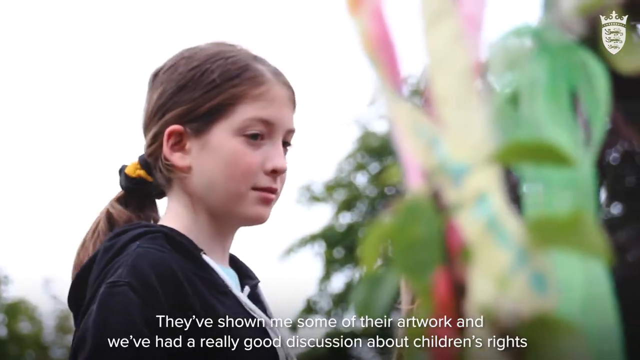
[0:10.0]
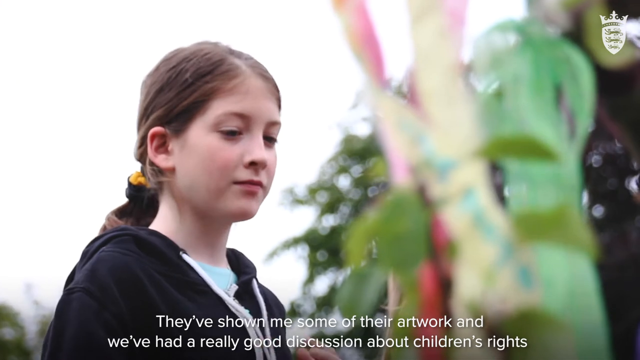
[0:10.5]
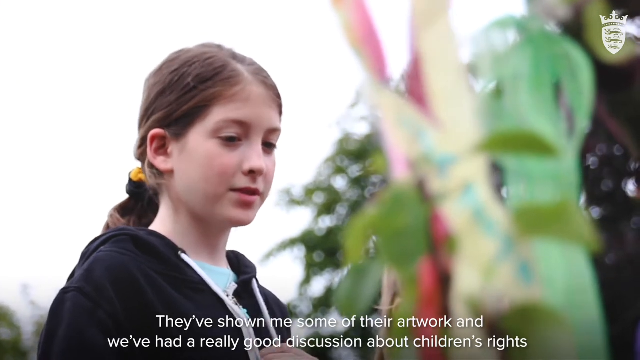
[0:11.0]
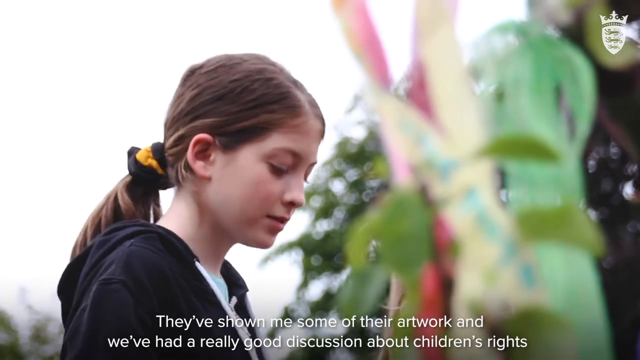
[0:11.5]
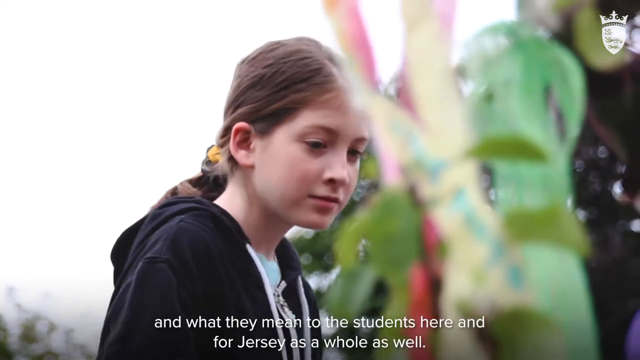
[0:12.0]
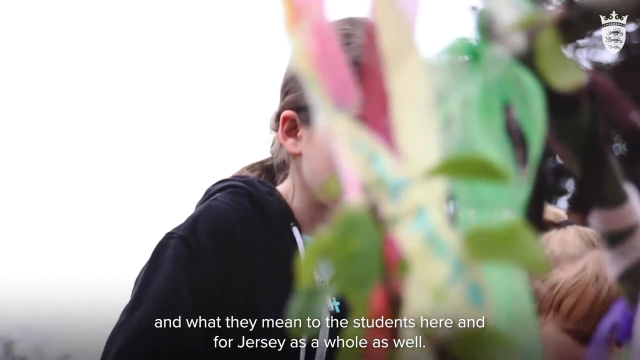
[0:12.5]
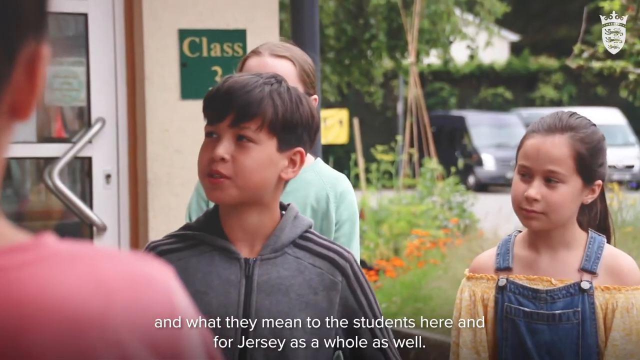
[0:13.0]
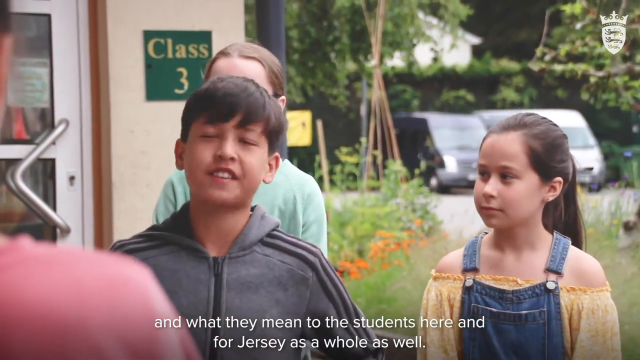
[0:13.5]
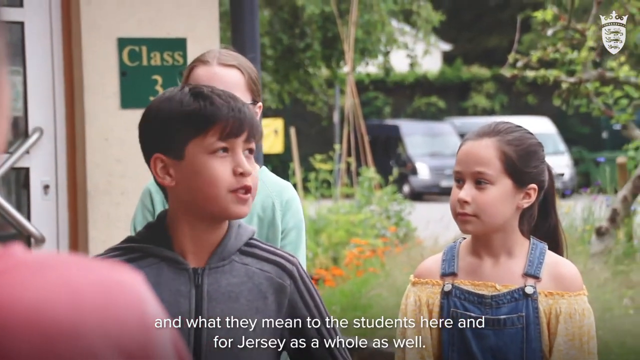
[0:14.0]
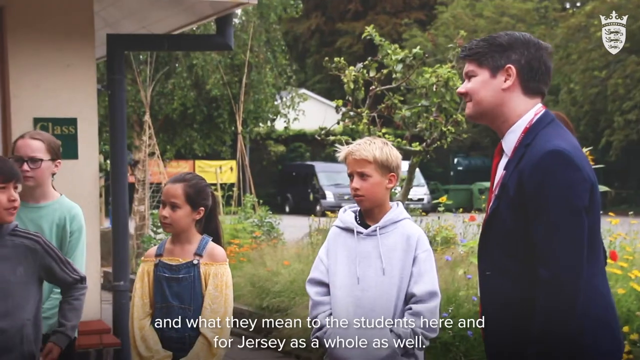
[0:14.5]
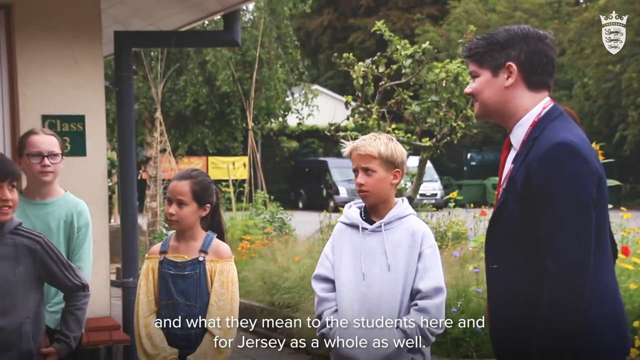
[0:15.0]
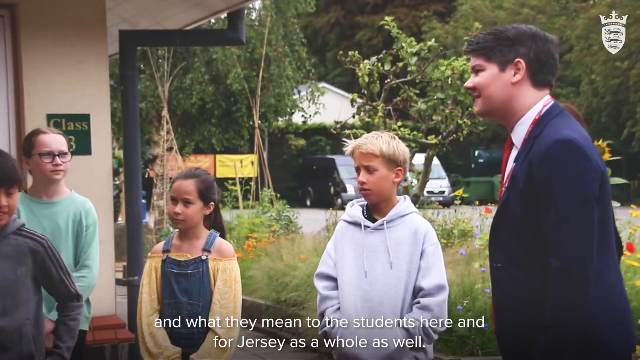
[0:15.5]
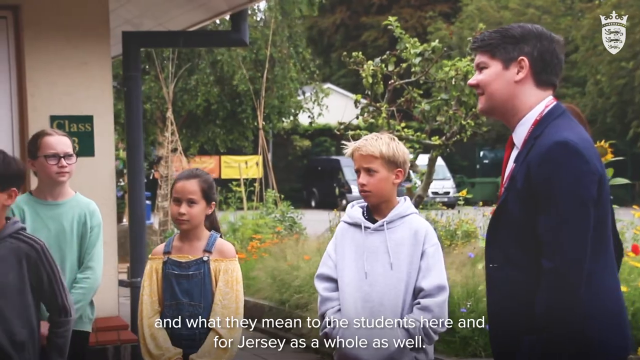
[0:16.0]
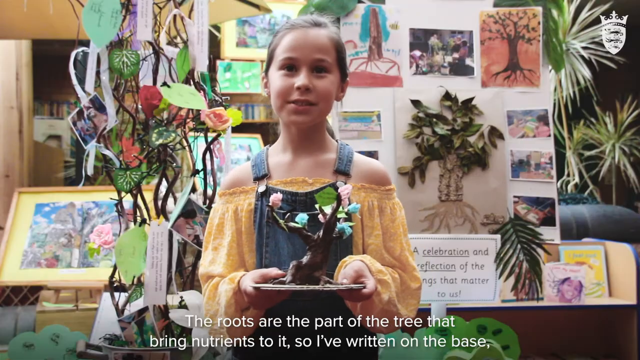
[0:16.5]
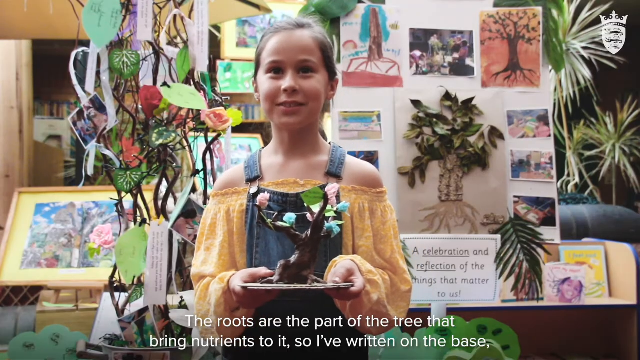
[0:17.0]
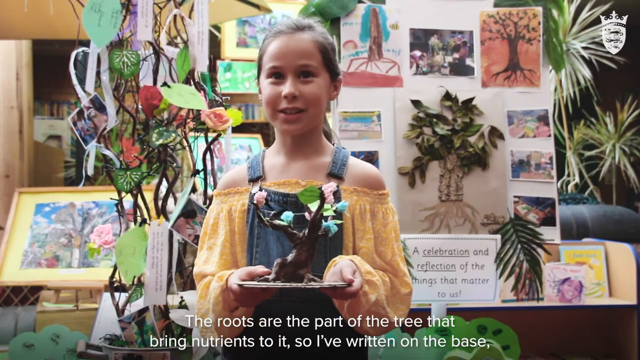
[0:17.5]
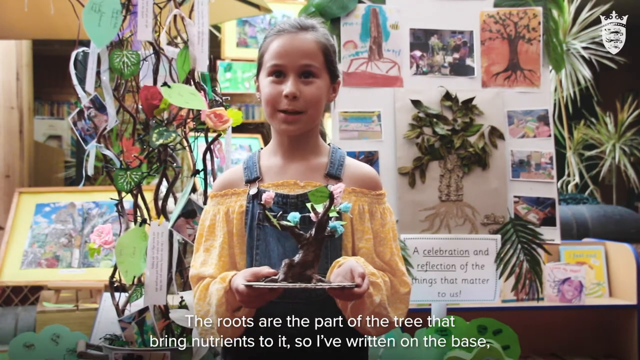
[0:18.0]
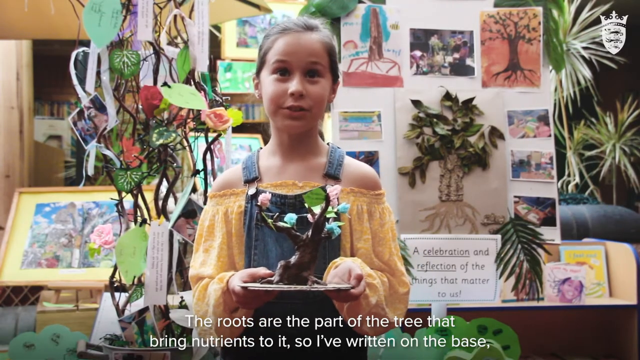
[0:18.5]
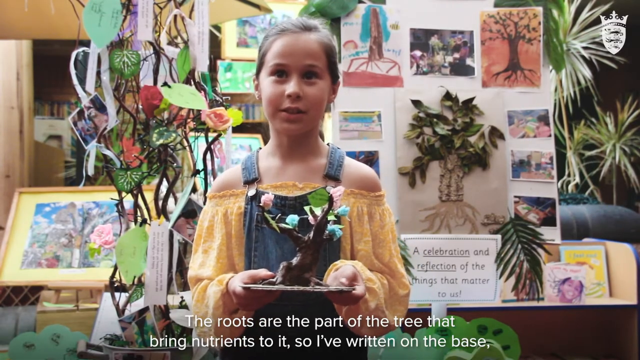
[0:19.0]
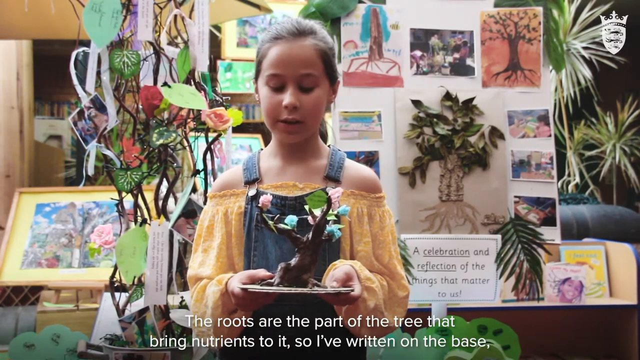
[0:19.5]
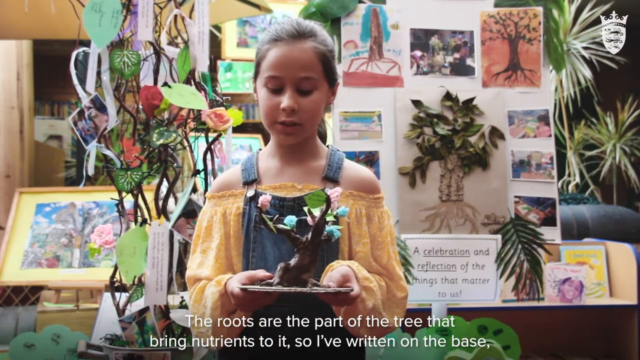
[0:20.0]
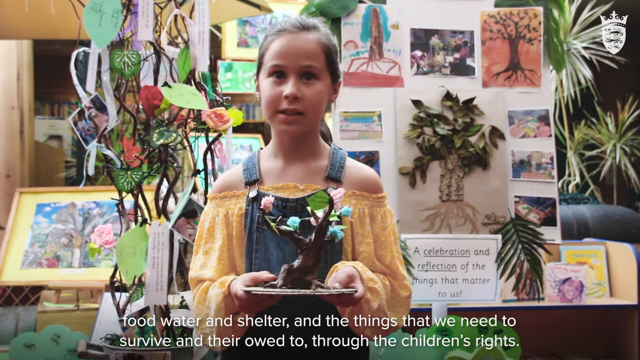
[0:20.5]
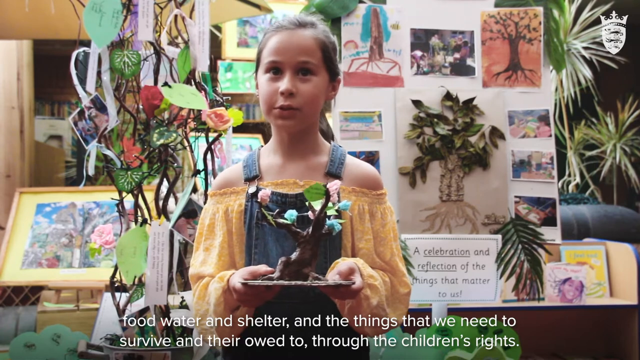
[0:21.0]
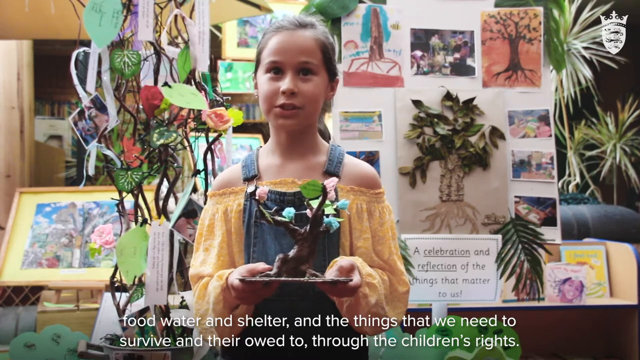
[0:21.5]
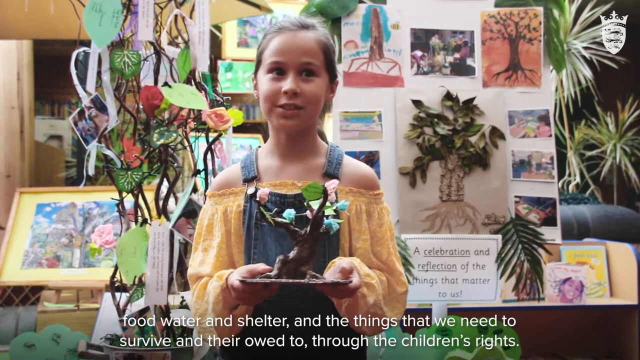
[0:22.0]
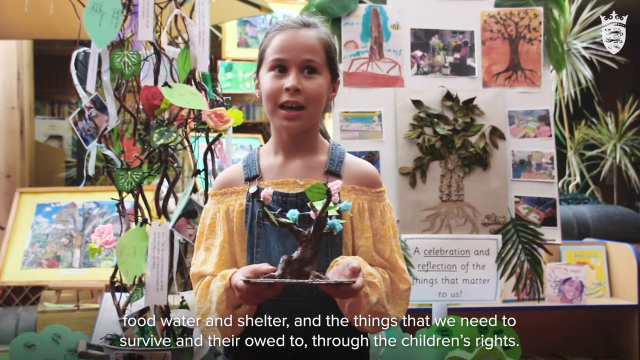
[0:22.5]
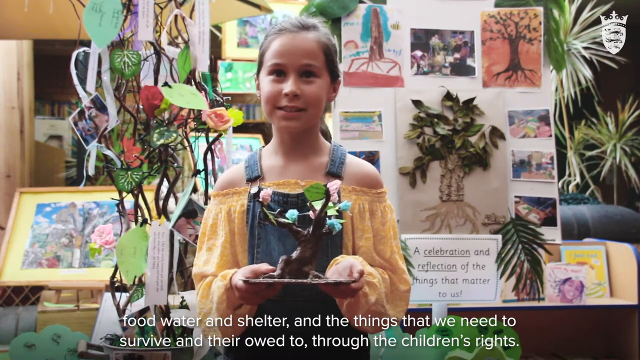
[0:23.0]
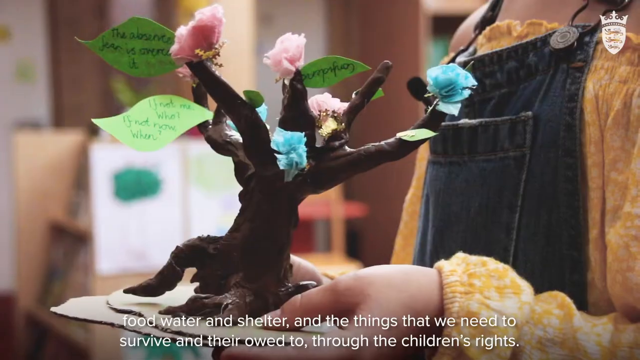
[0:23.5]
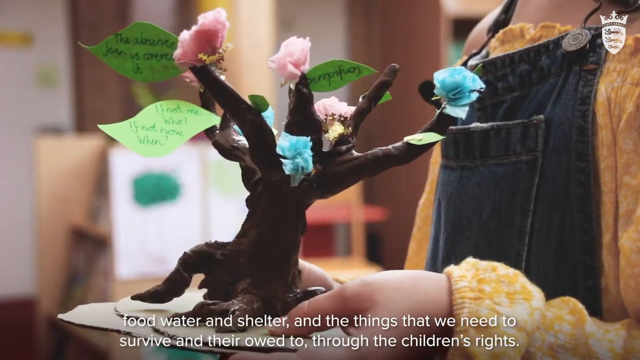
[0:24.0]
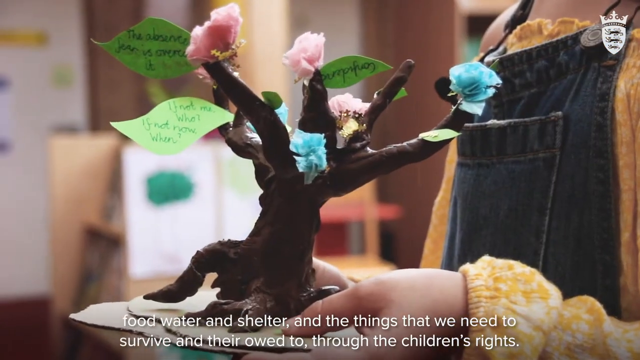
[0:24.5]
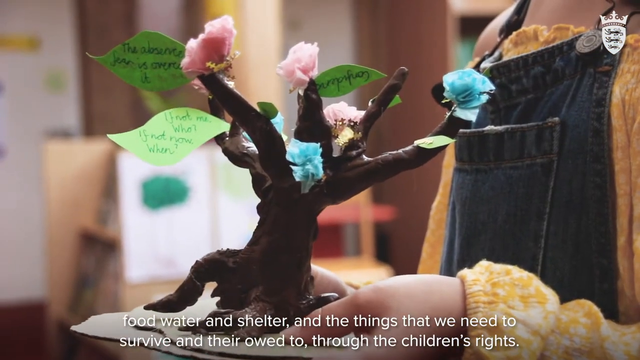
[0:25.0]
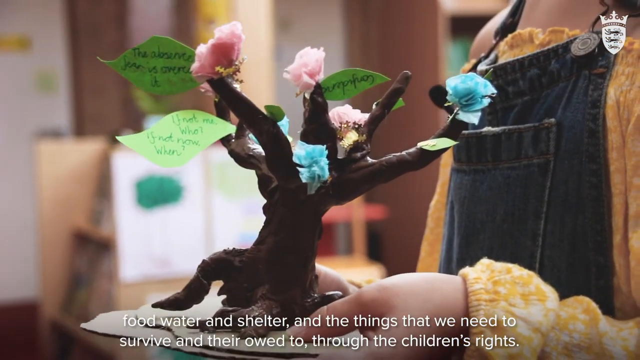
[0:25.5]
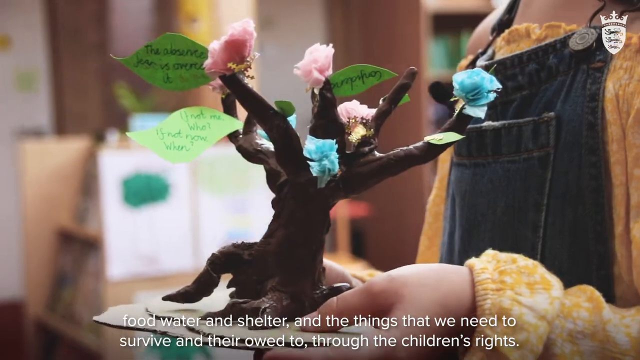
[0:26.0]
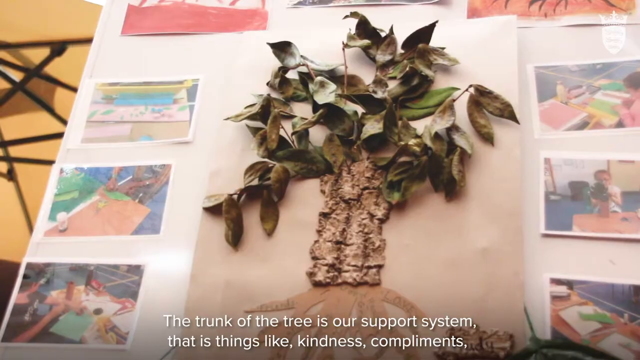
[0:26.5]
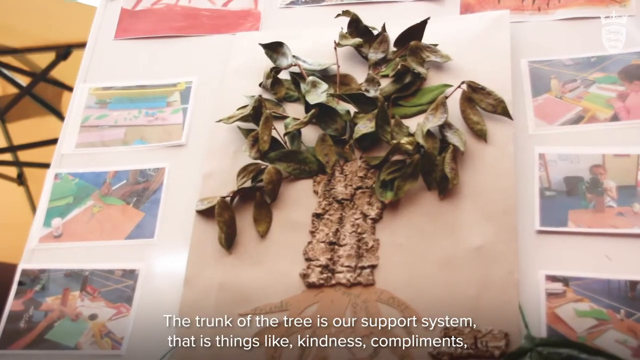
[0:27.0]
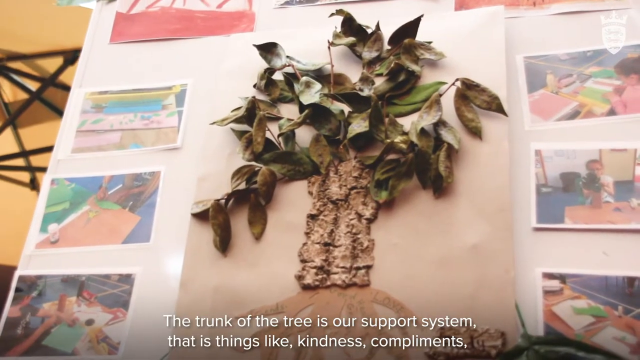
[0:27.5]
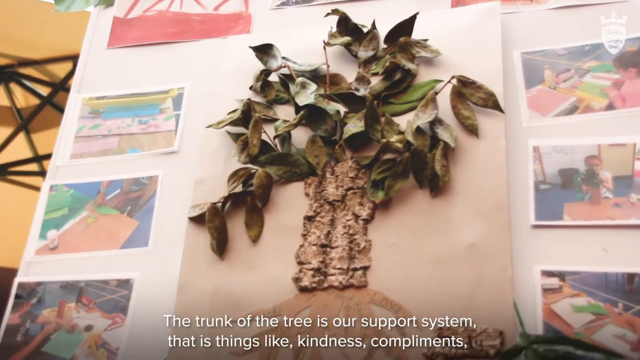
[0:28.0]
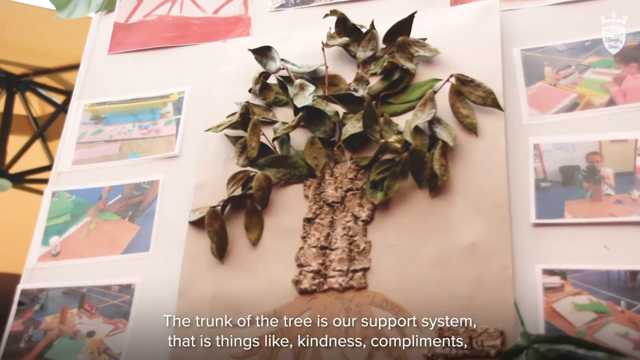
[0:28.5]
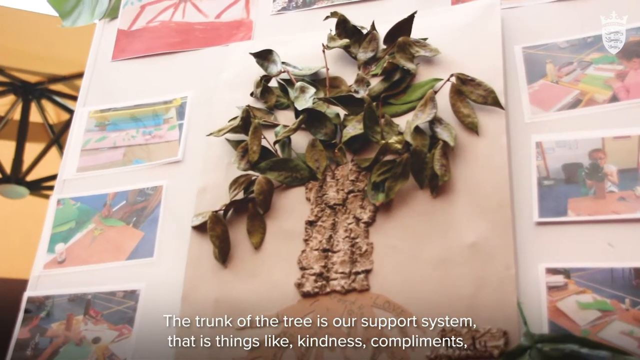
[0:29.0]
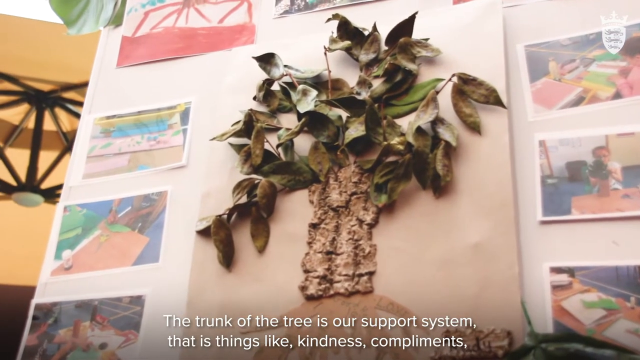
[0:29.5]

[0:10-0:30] The camera focuses on one of the children as her artwork is discussed: a little girl in what looks like a black sweatshirt. The video cuts to the man who seems to be interviewing, or talking to the interviewer, and then shows children explaining their stories, mentioning food and water, apparently about rights and helping children. There appears to be symbolism involving a tree that stands for nourishment and helping the children, part of some kind of artistic presentation. The filming is stylized but documentary-like, with English subtitles at the bottom. A little tree that a girl created is shown; the children appear to be presenting art, decoratively designed small trees that look well done.